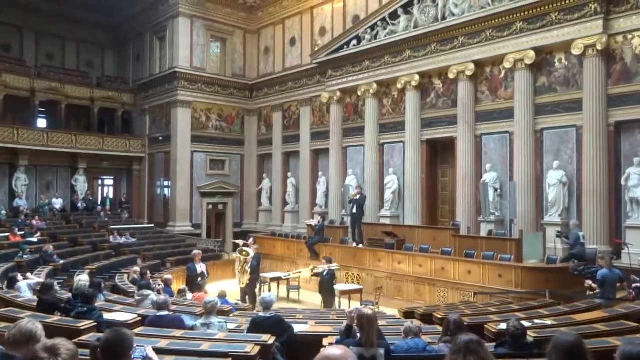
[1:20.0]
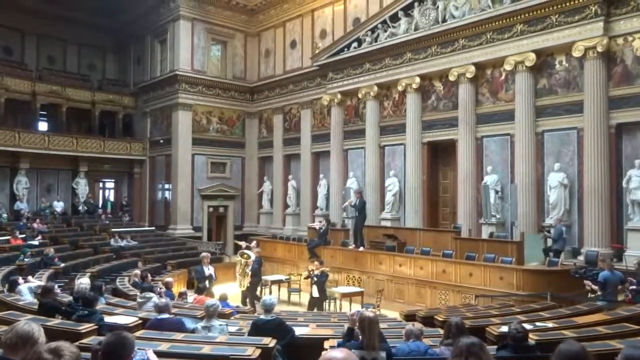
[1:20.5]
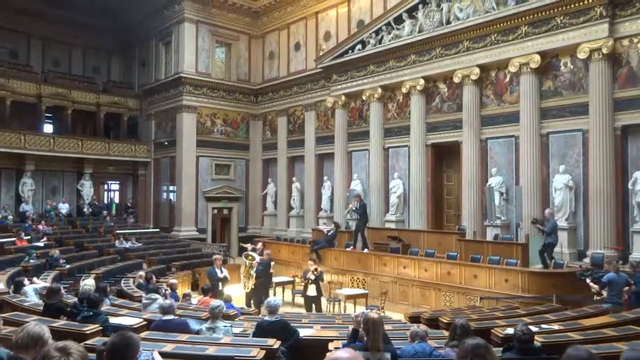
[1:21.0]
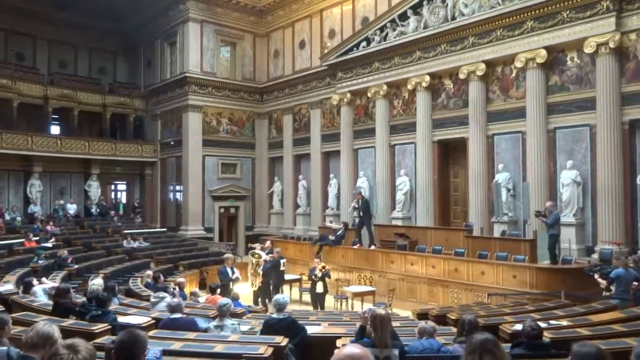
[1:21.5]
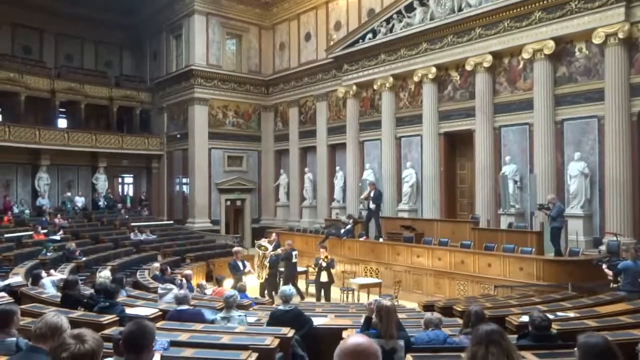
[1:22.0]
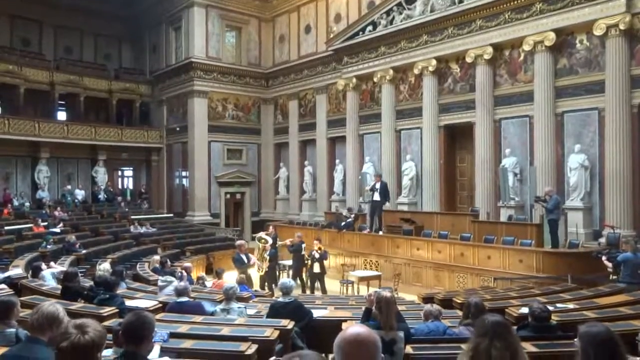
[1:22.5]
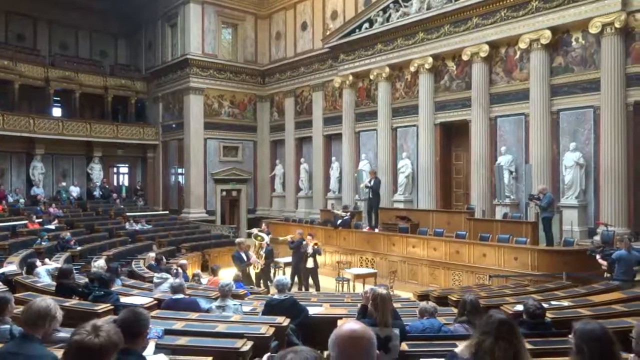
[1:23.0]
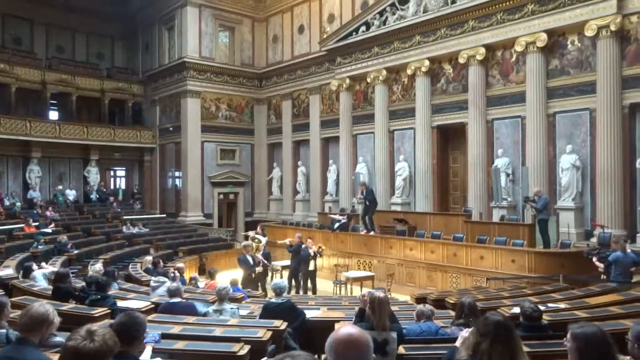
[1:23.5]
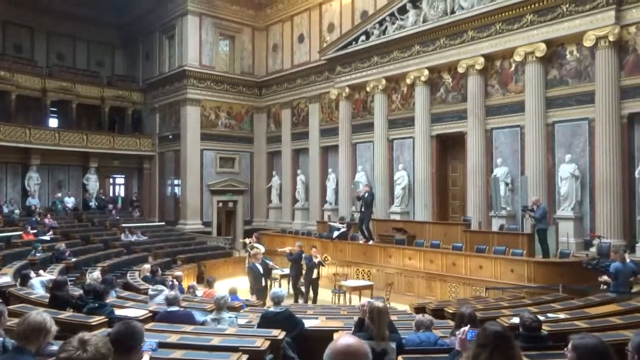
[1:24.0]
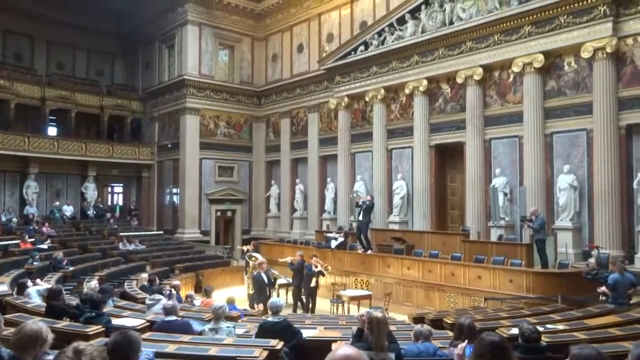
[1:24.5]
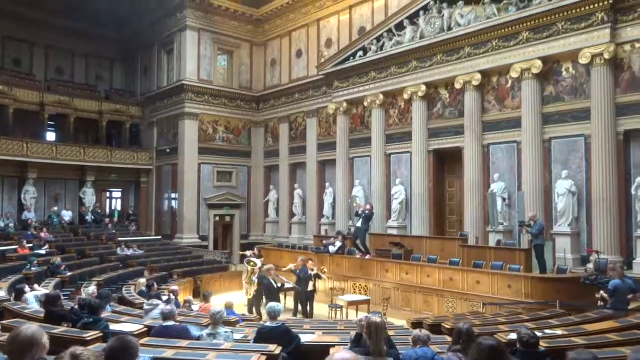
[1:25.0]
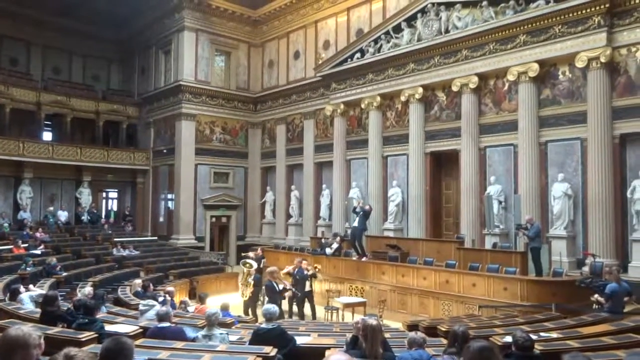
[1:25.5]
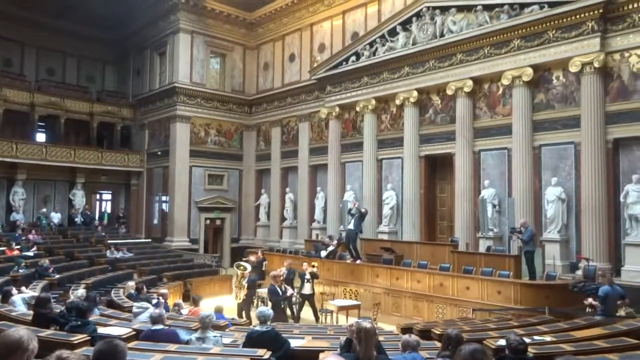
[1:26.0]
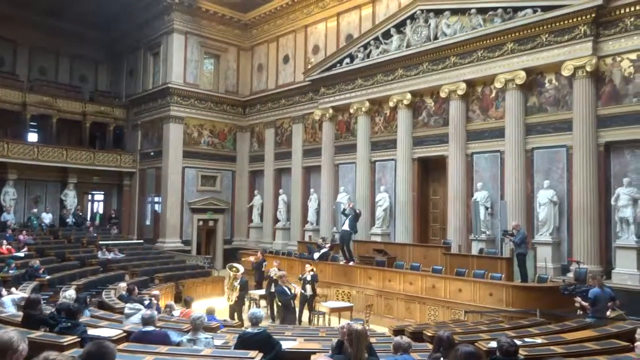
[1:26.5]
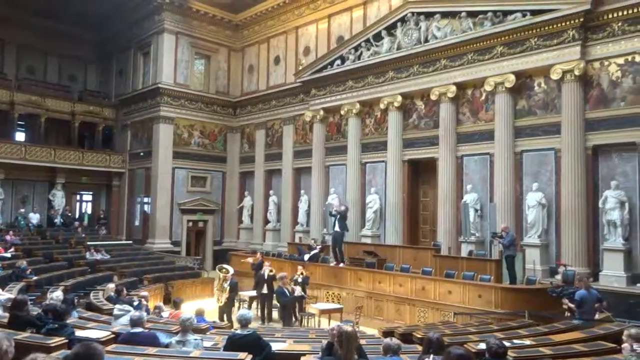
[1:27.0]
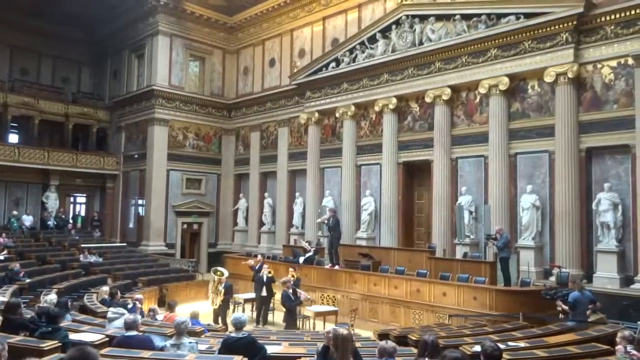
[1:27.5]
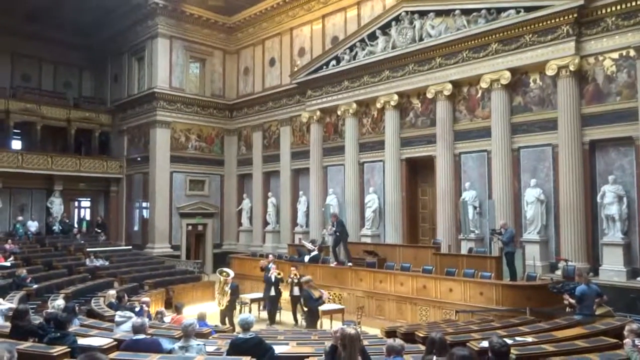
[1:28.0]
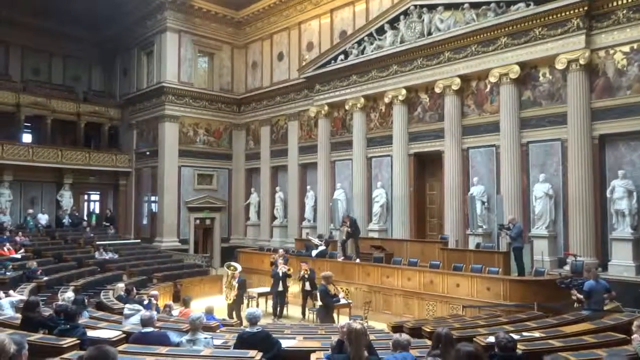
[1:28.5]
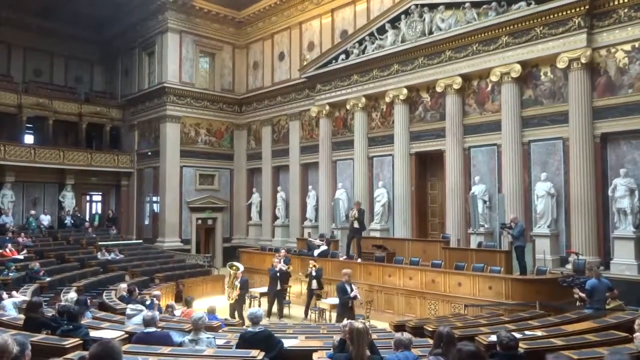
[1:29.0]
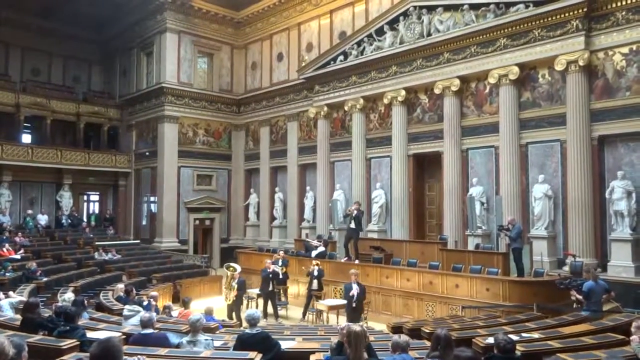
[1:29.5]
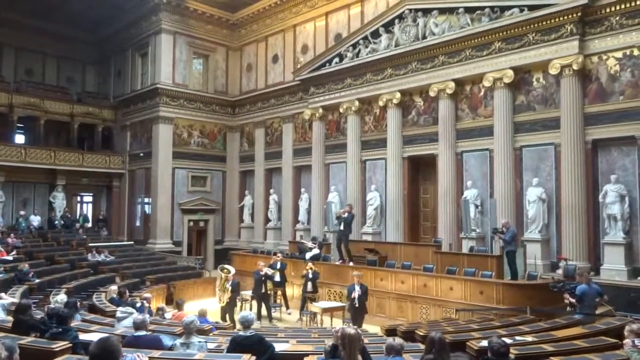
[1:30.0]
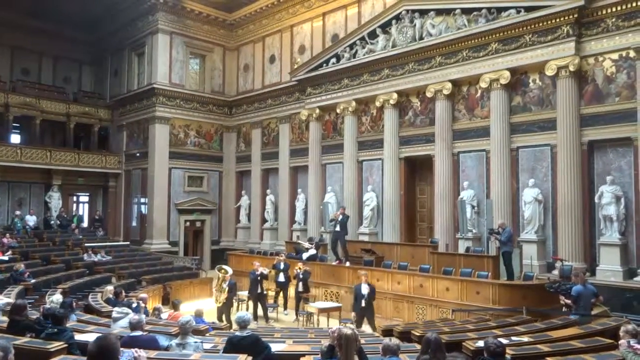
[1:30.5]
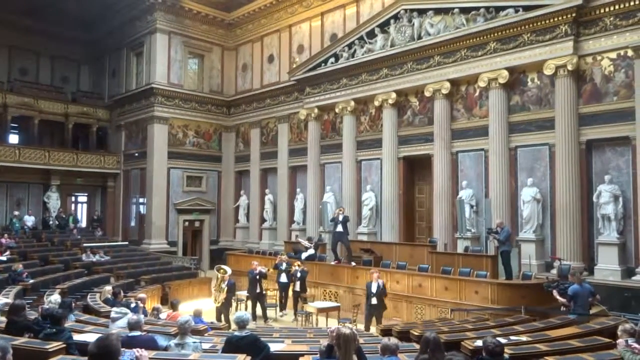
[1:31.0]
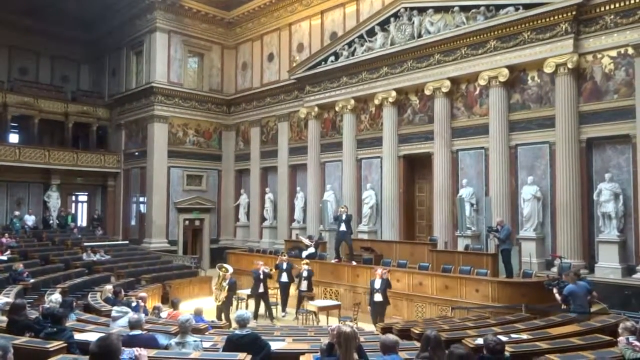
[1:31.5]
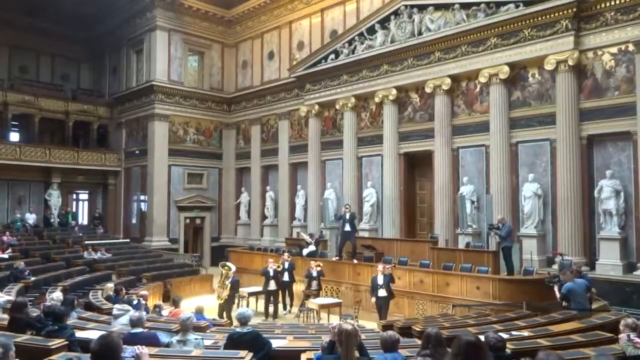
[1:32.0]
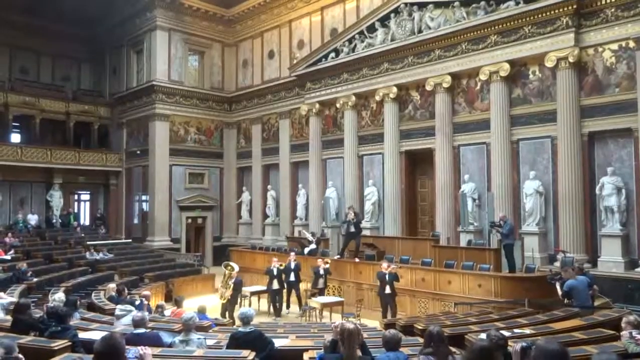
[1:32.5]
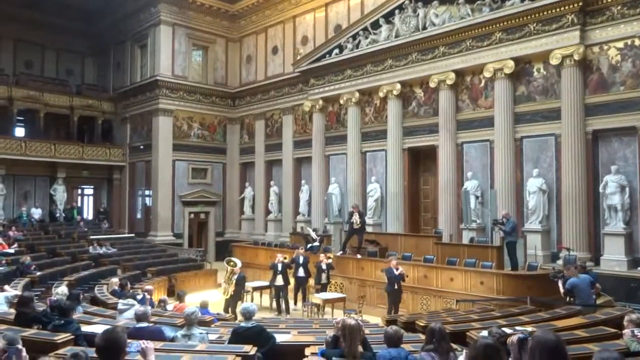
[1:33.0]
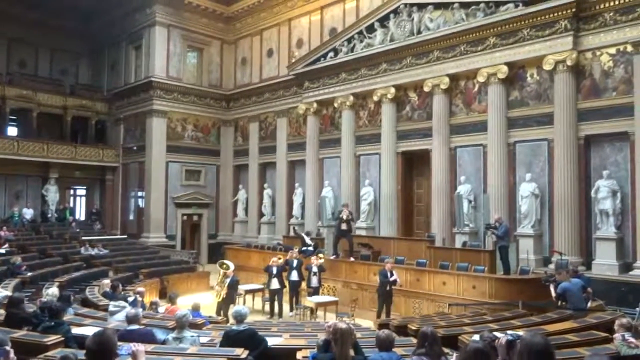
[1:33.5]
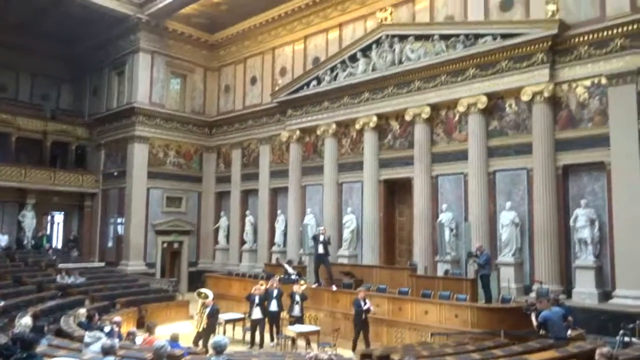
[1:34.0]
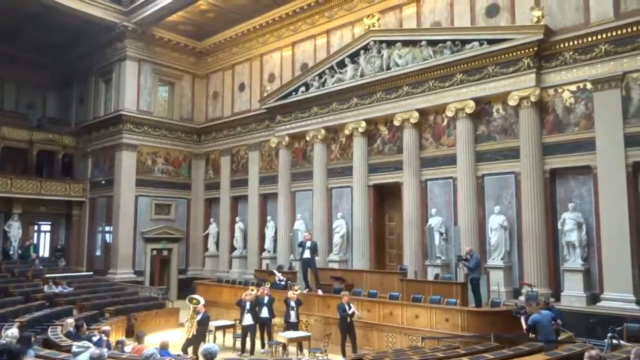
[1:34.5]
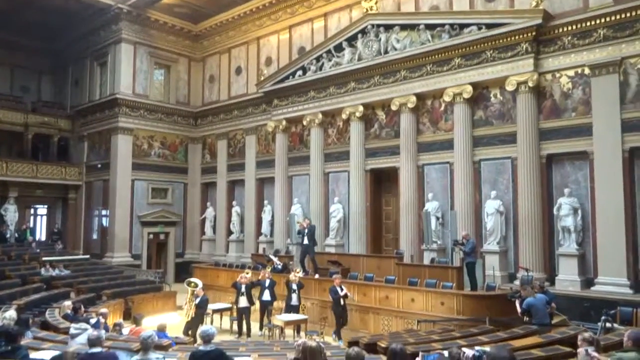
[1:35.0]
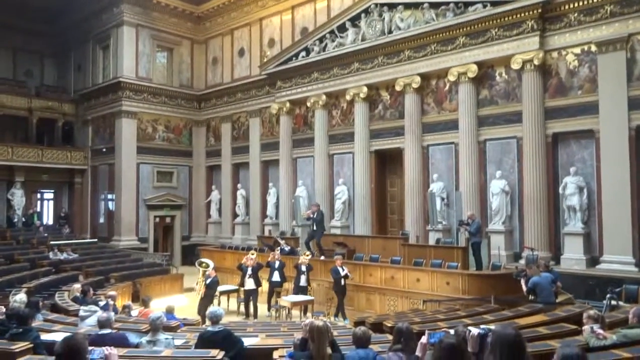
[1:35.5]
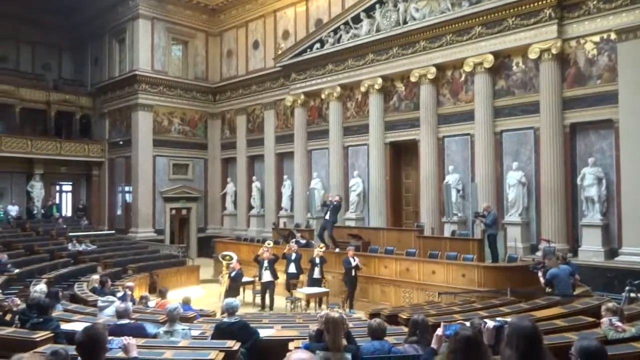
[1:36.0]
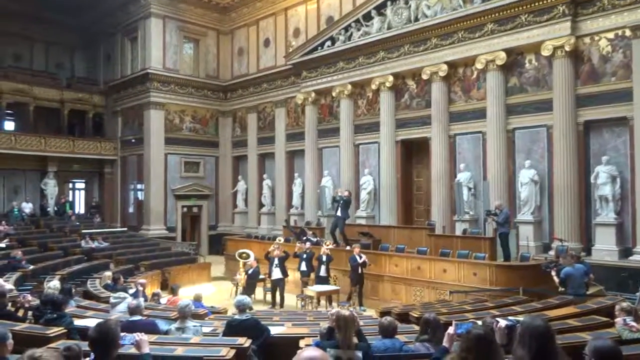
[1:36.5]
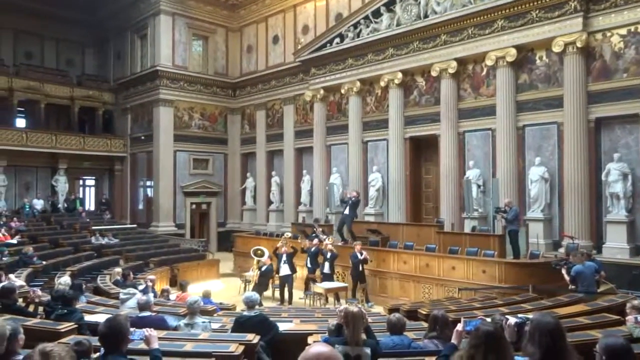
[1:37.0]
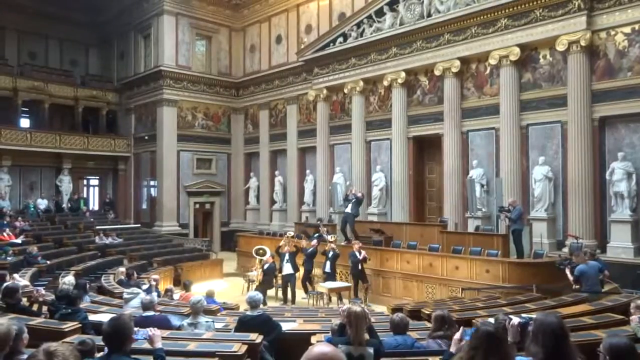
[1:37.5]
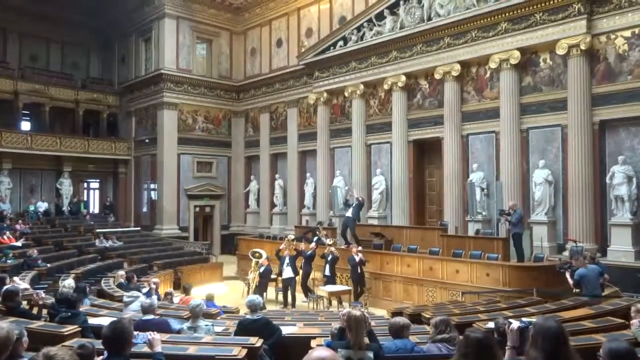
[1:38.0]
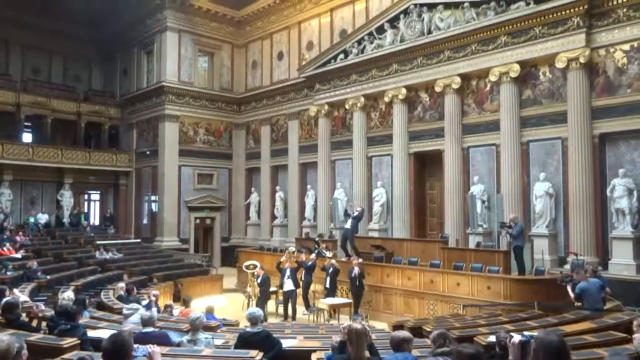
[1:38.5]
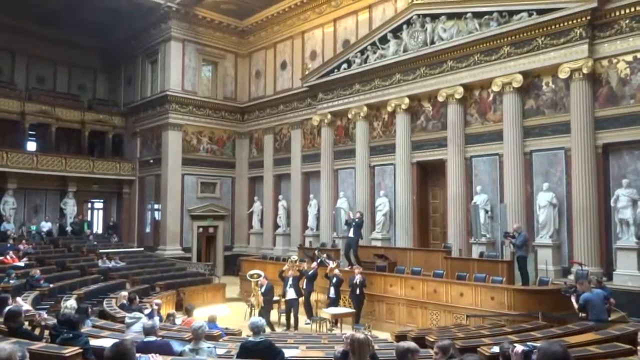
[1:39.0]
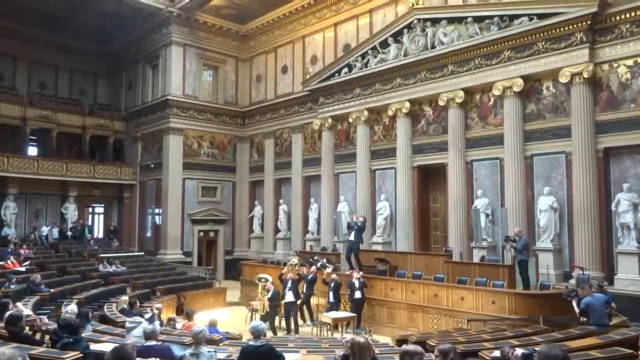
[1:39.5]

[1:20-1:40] The wide shot of the people playing musical instruments continues. One man stands on the podium and one man sits on the podium at the right end. A man moves in with a camera, wearing the same jacket as the others. In the far left background against the wall, a couple of people are standing, though most of the crowd is sitting down. The people on the floor level are still walking around, blowing their horns in people's faces. The man standing on the side of the wooden podium puts on a big show, leaning back as he blows his horn. A couple of men wander a little more to the left and a couple to the right; sometimes they tilt their heads back when they blow, sometimes not. A couple of people on the far left move a little toward the right. There are not many people in the crowd on the left side, maybe 14. As the camera pans up, the people across the bottom are no longer very visible; only a few in the first three rows can be seen, about 10 or 11 people.